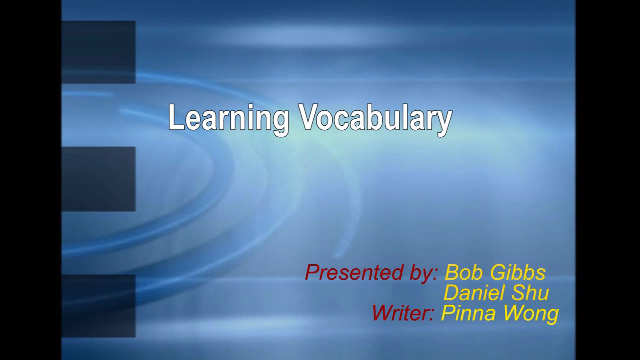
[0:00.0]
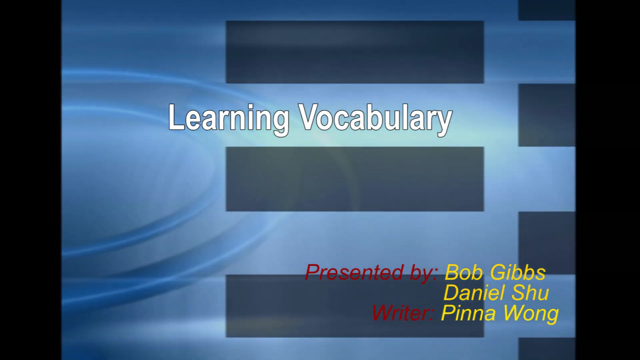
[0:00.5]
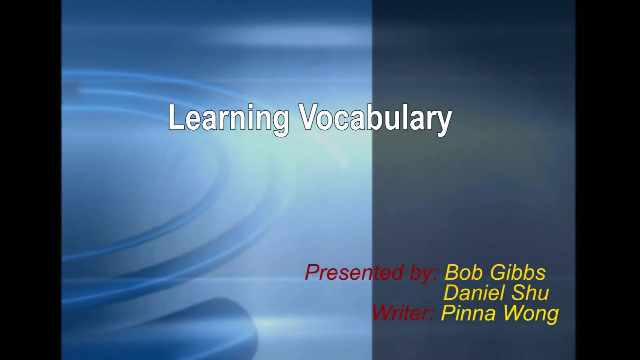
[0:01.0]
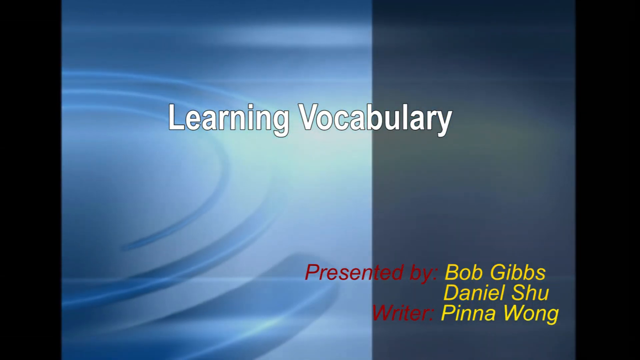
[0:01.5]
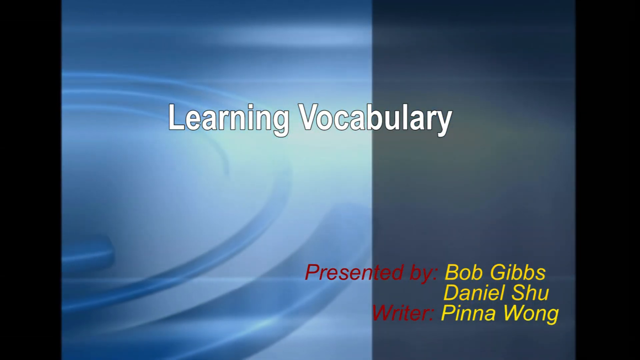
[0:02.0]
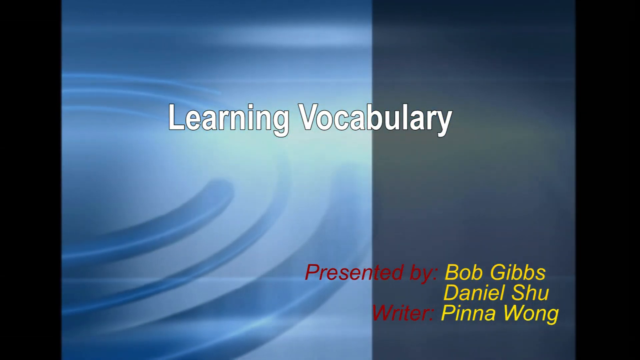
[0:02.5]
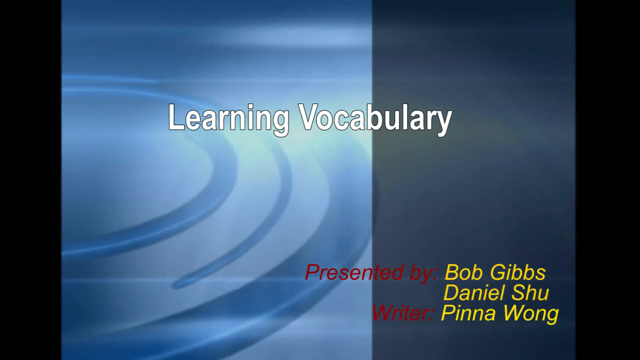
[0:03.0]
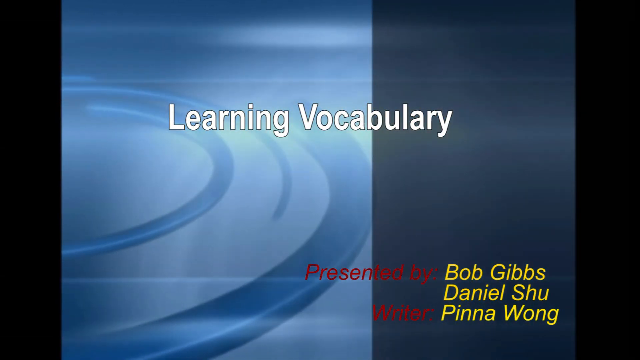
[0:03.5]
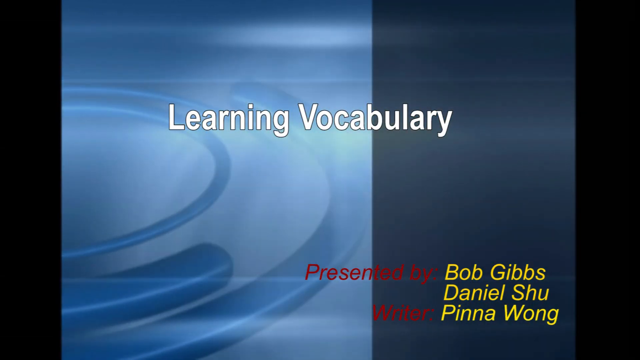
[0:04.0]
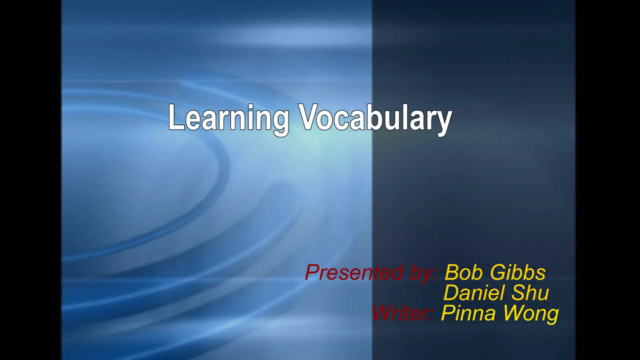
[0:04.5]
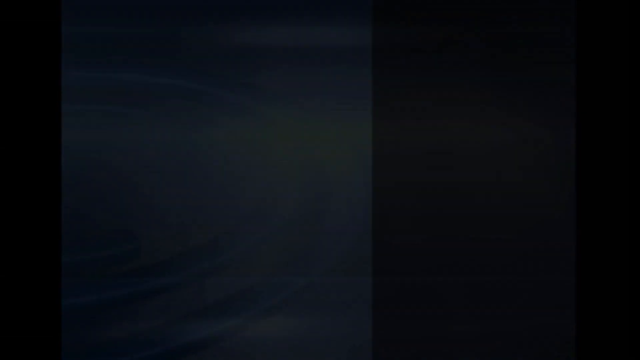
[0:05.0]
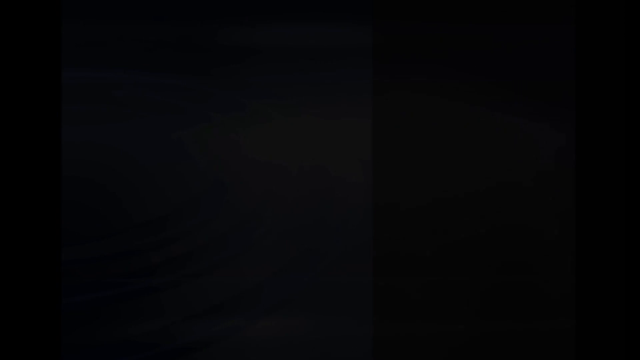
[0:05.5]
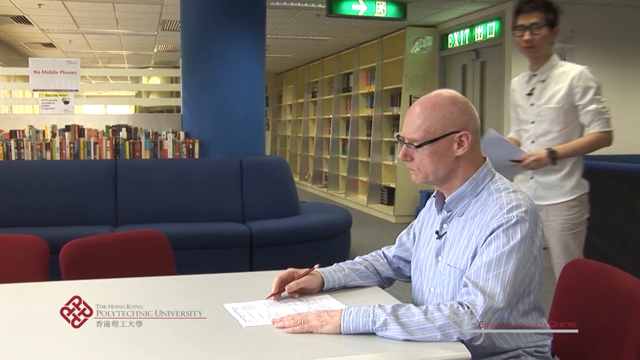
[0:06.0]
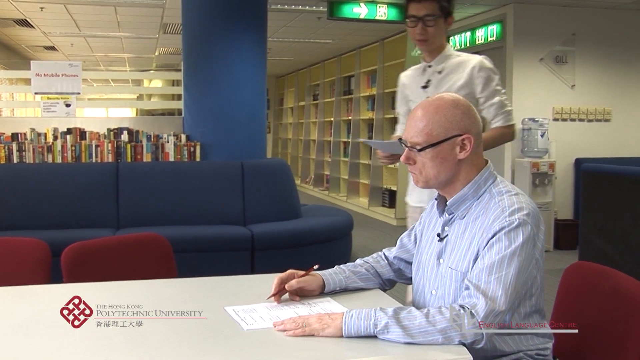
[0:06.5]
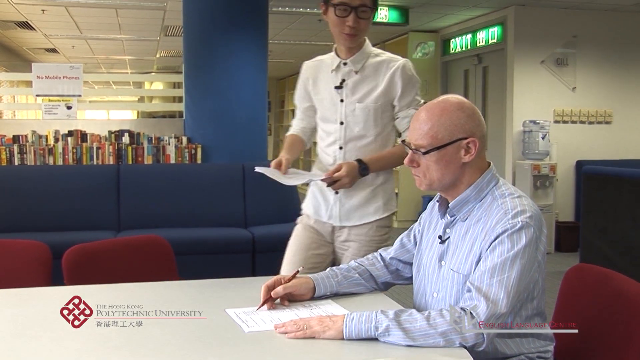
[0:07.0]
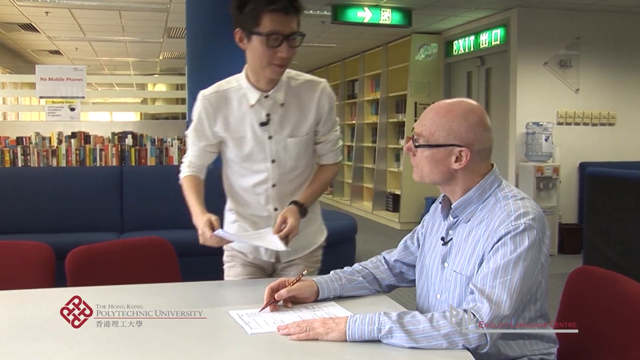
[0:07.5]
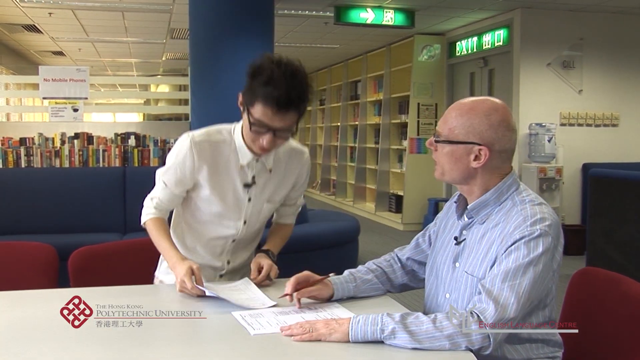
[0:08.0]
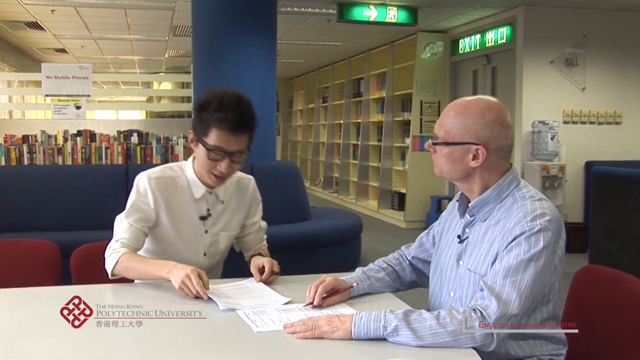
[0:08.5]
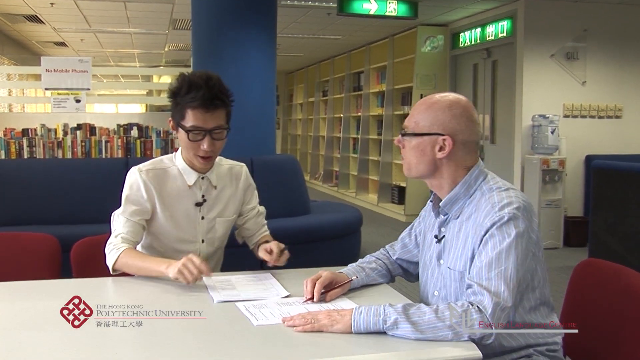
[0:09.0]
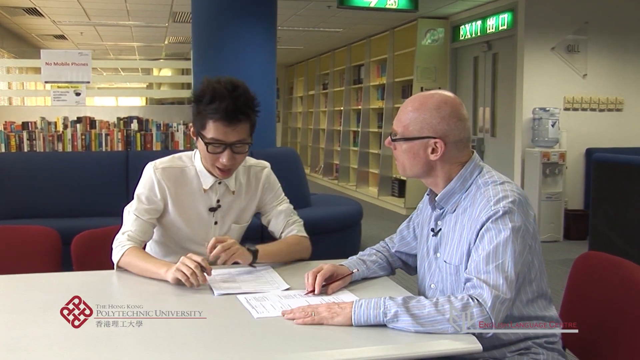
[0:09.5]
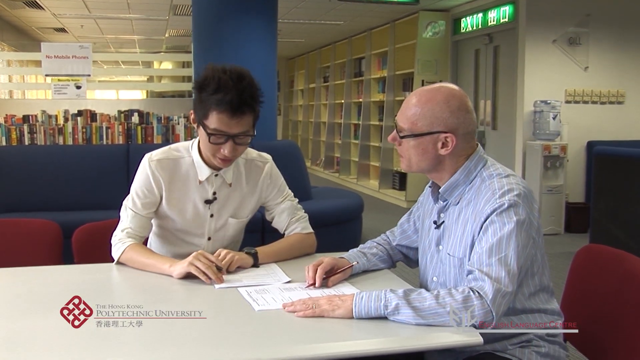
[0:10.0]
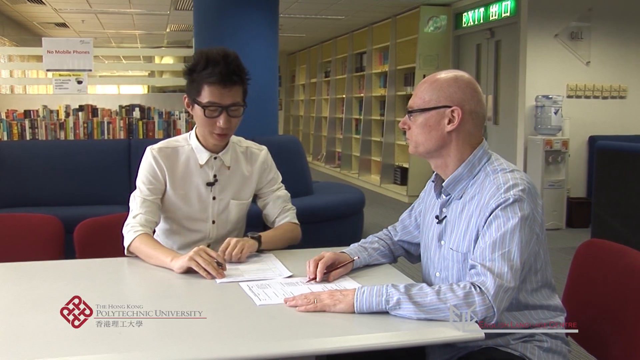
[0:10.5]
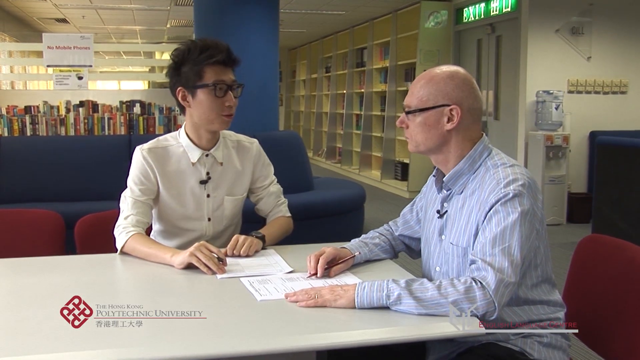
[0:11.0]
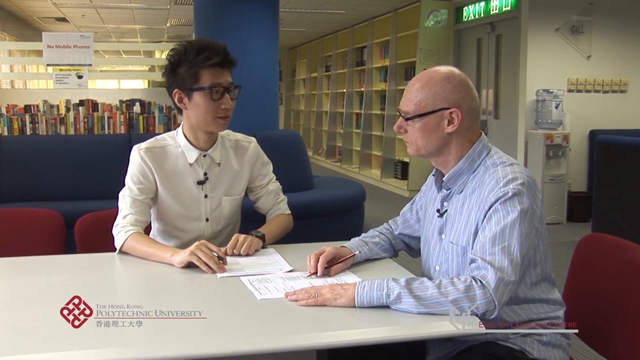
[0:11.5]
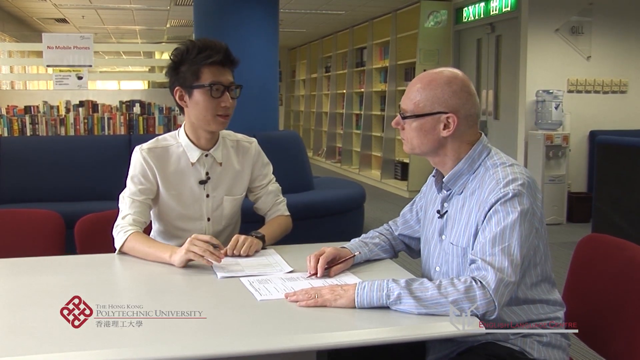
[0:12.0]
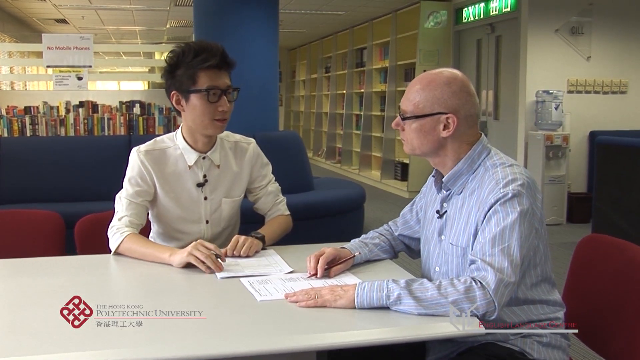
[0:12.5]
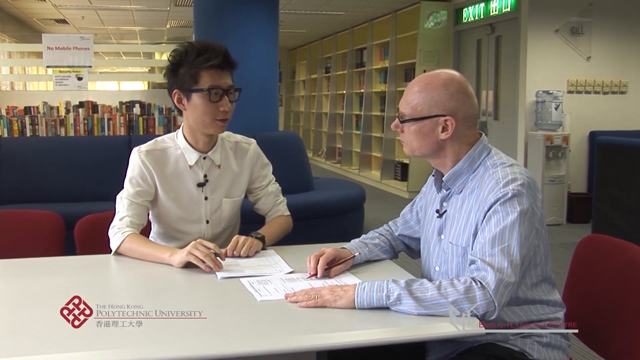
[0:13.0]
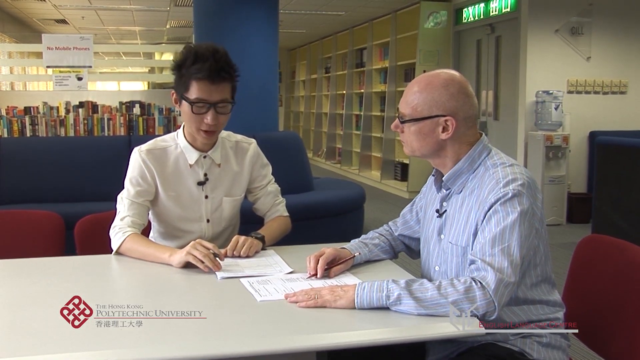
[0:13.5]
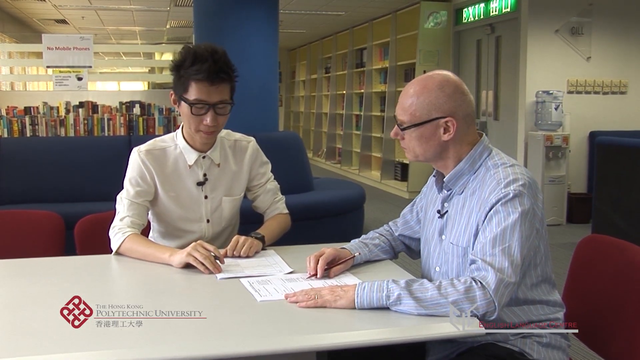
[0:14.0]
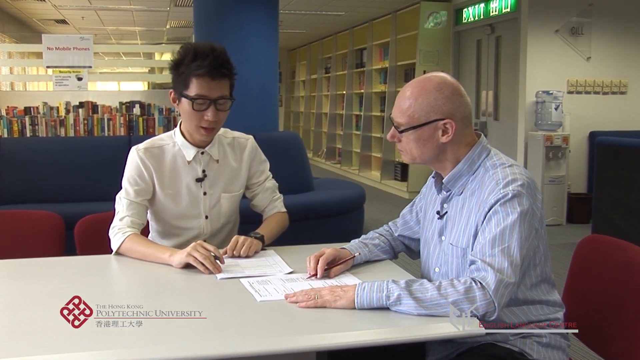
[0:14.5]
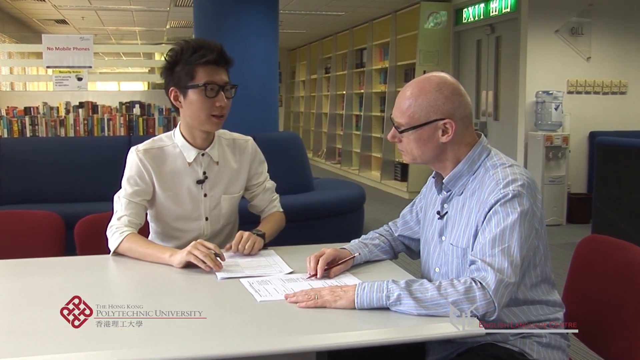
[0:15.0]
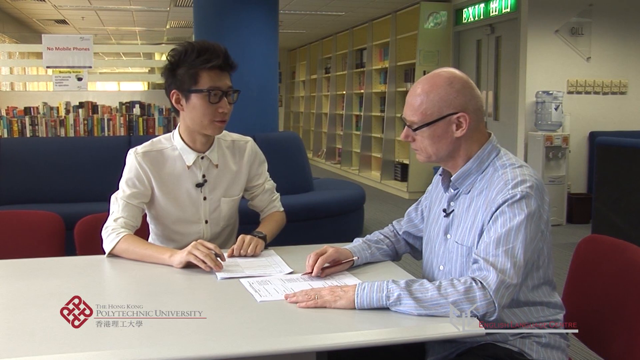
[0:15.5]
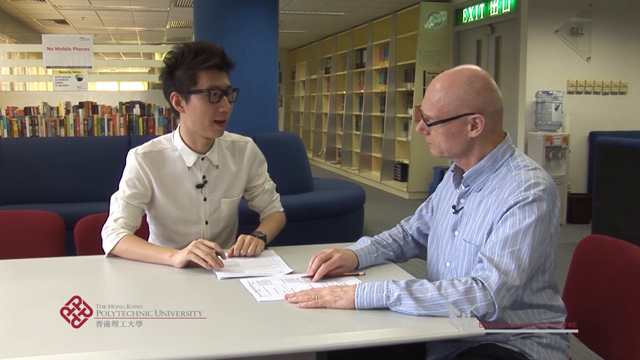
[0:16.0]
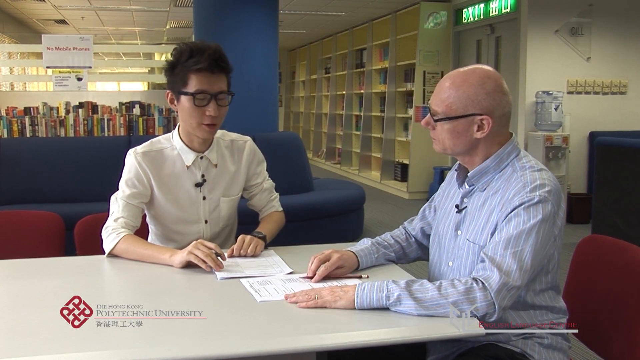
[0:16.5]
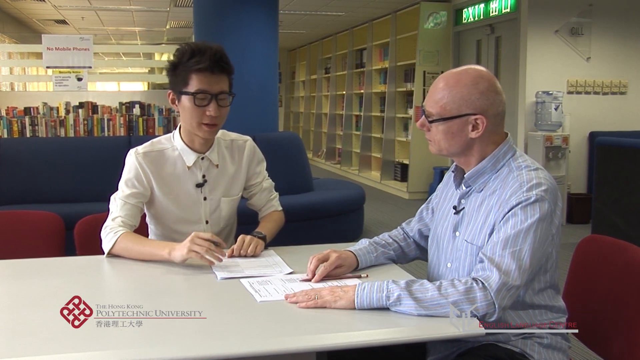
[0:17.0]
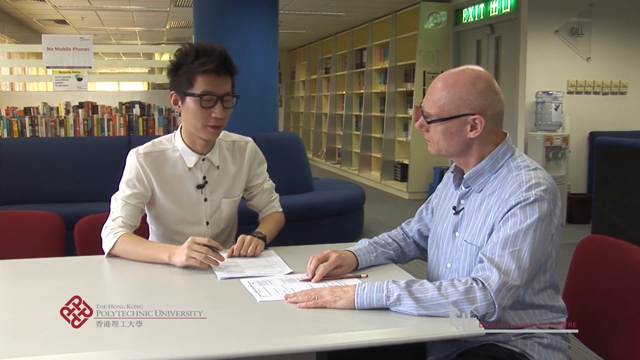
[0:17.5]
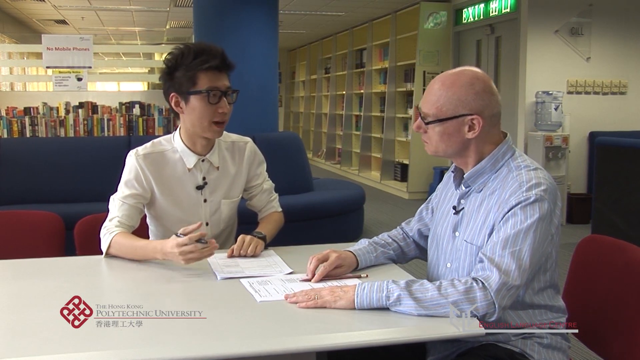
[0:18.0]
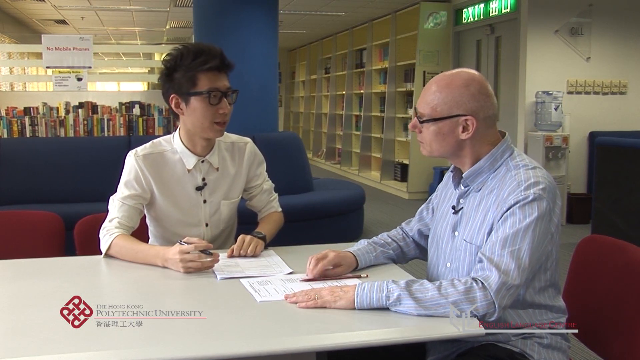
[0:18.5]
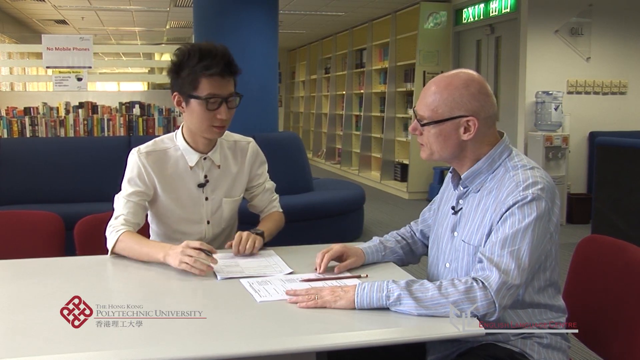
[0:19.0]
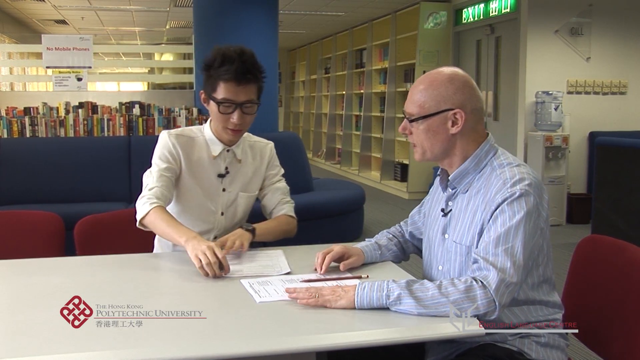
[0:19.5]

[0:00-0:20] An educational video opens on a slide reading "learning vocabulary" in white font. In the lower right corner are the credits: presented by Bob Gibbs and Daniel Shu, with the writer Pinna Wong. A role play begins in a library, where a bald man is sitting at a table with some paper and a pencil in front of him. He wears glasses and a blue and white shirt and is sitting in a red chair. Nearby are red felt chairs, a blue couch, books on shelves, and signs that appear to be in an Asian language. An Asian student, apparently a college student, walks up and sits down in a red chair next to the professor, who looks up. The Asian male has glasses, a button-up white shirt with the sleeves pulled up to his elbows, and a microphone on his shirt. He and the man at the desk talk back and forth, repeatedly looking at the student's paper. The student holds a pen in the right hand and wears a watch on the left wrist. The student then turns the paper to face the older professor.